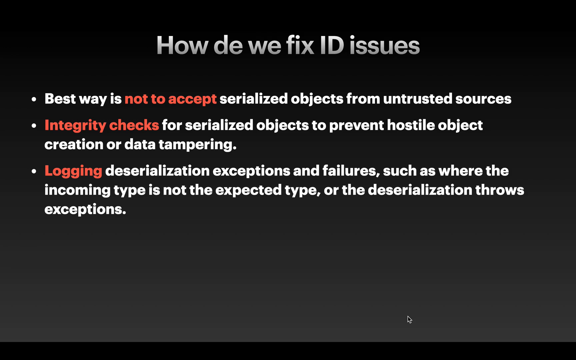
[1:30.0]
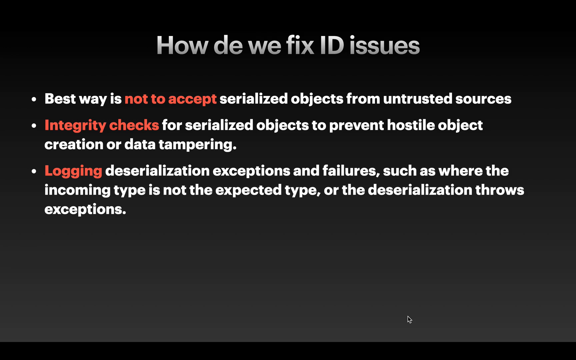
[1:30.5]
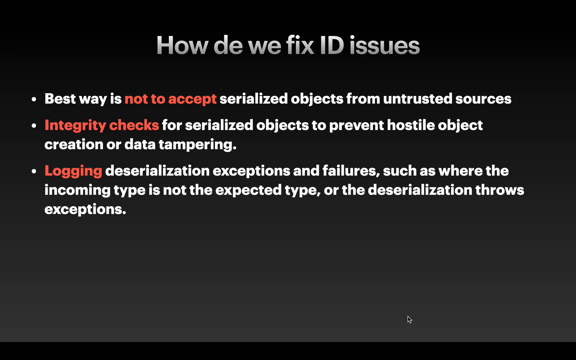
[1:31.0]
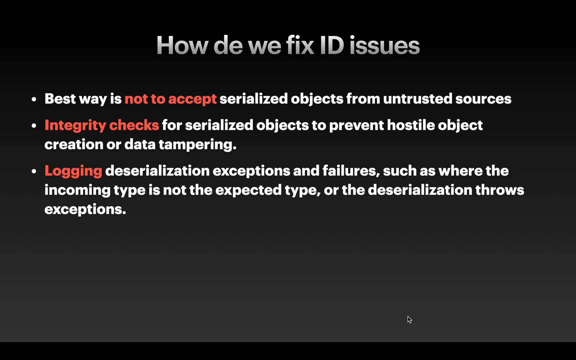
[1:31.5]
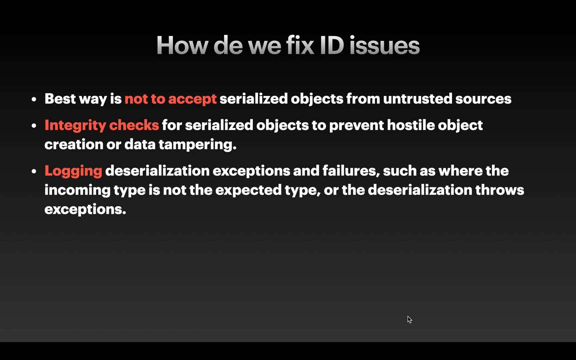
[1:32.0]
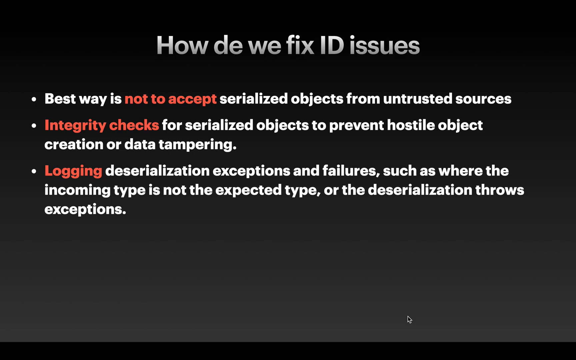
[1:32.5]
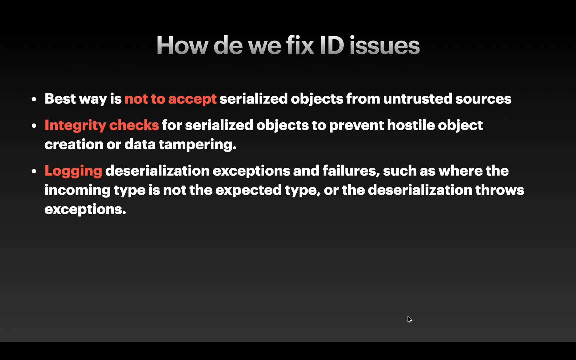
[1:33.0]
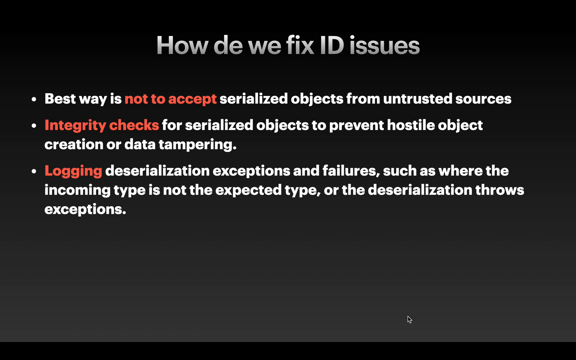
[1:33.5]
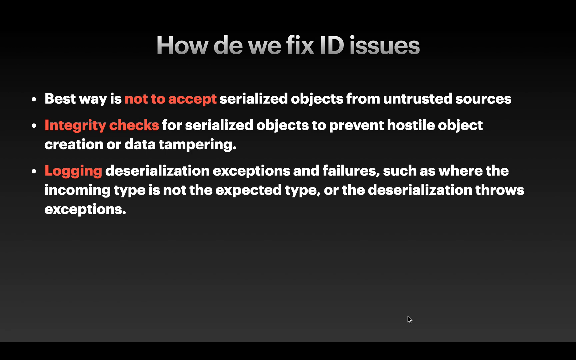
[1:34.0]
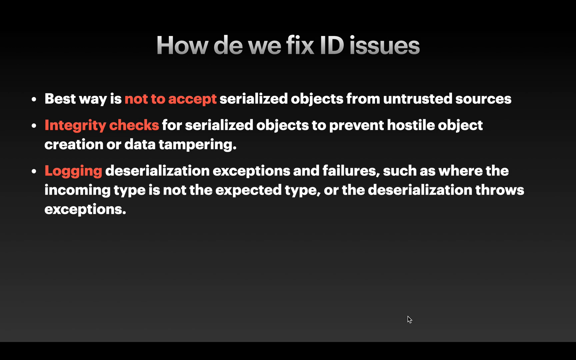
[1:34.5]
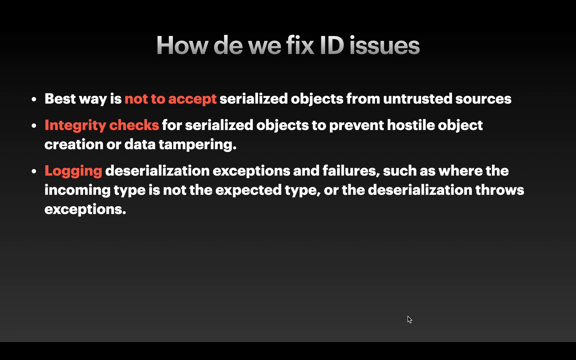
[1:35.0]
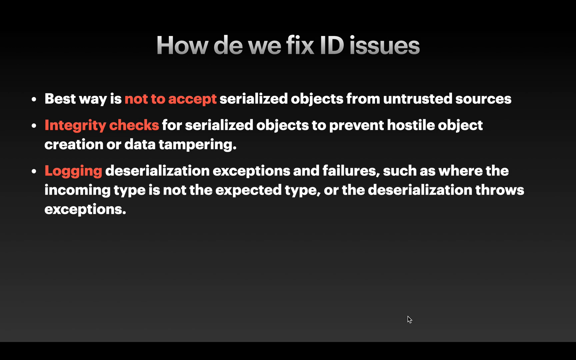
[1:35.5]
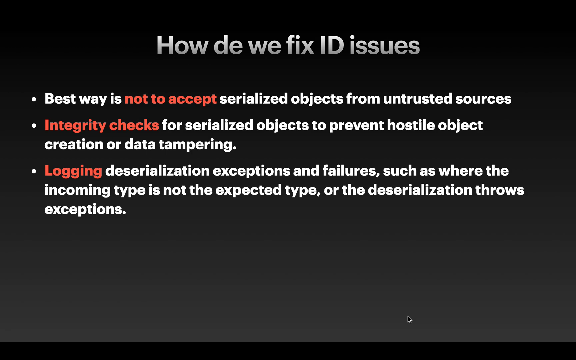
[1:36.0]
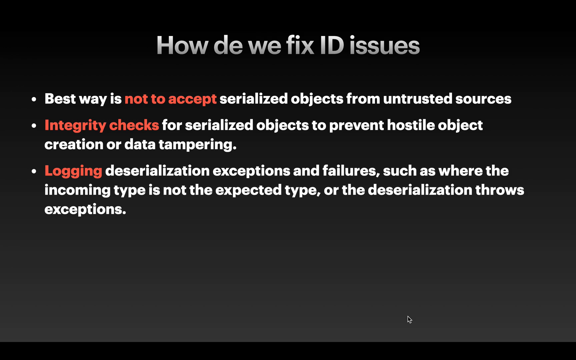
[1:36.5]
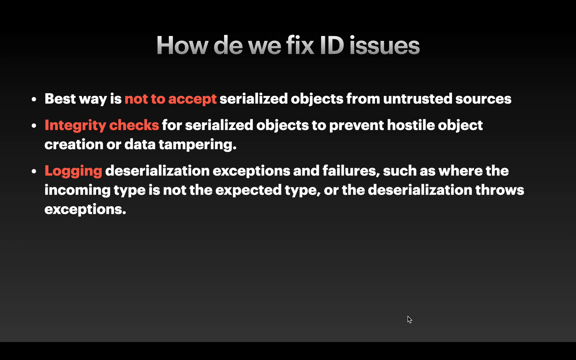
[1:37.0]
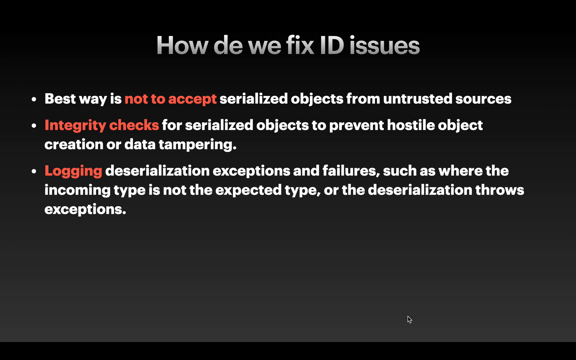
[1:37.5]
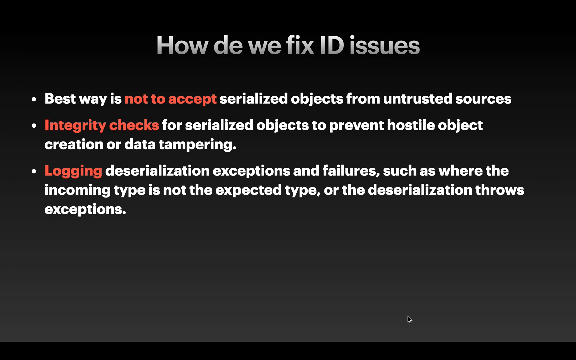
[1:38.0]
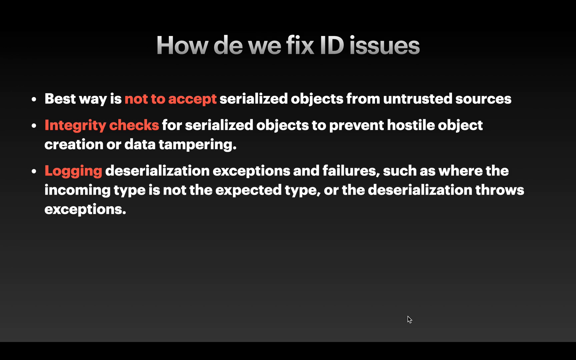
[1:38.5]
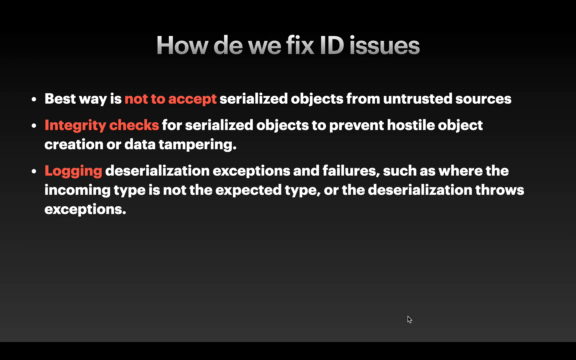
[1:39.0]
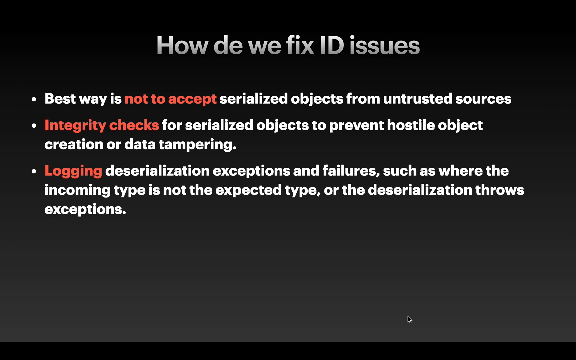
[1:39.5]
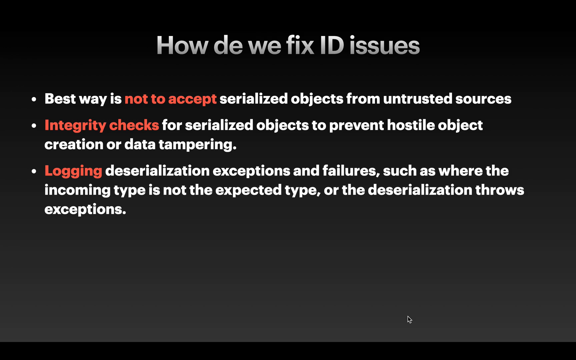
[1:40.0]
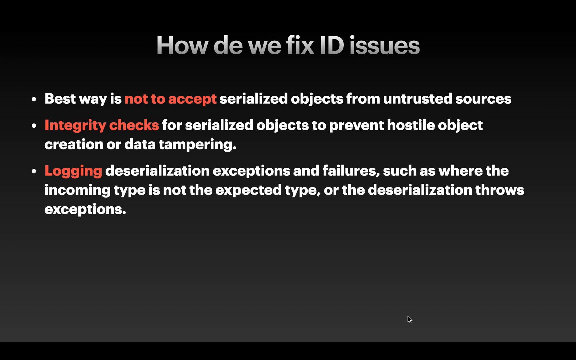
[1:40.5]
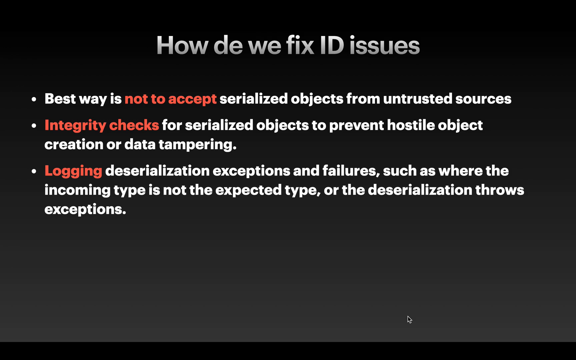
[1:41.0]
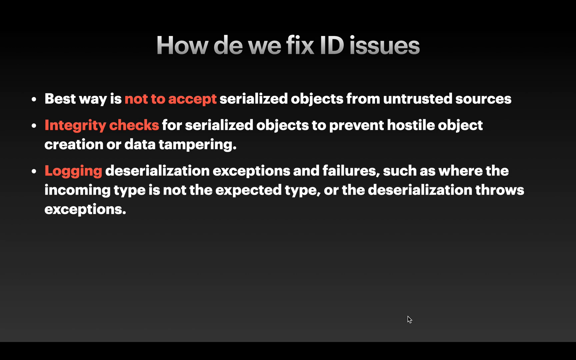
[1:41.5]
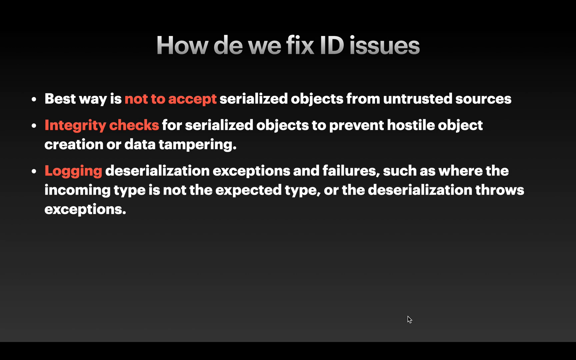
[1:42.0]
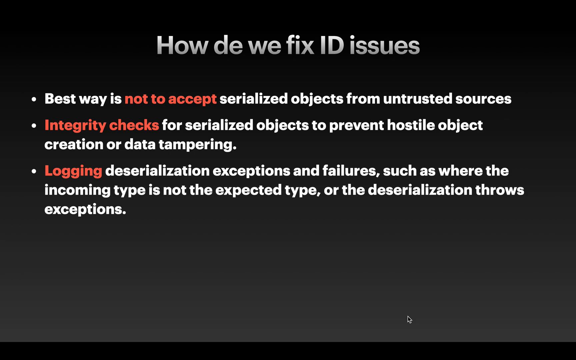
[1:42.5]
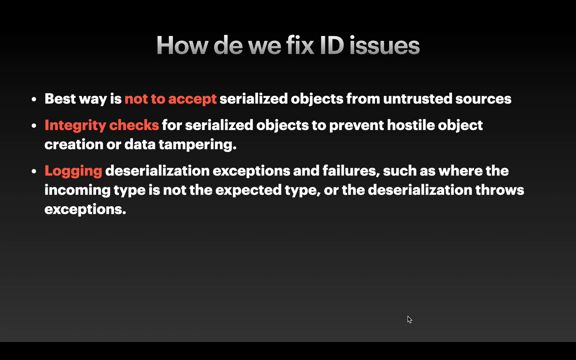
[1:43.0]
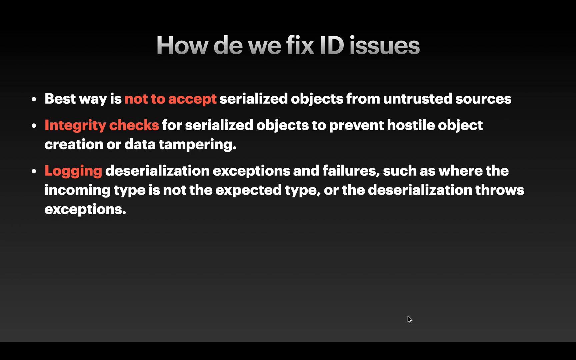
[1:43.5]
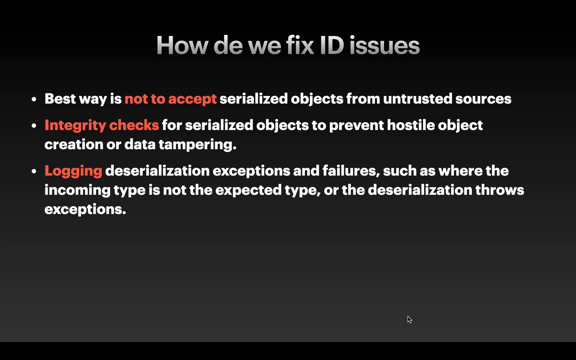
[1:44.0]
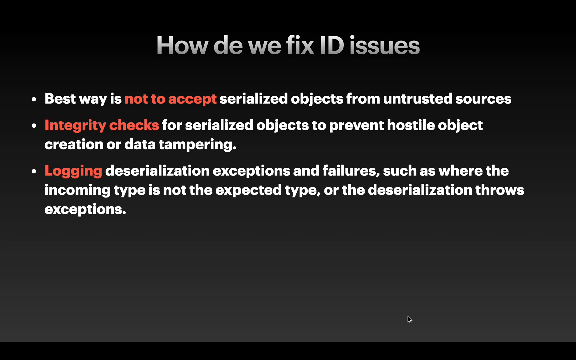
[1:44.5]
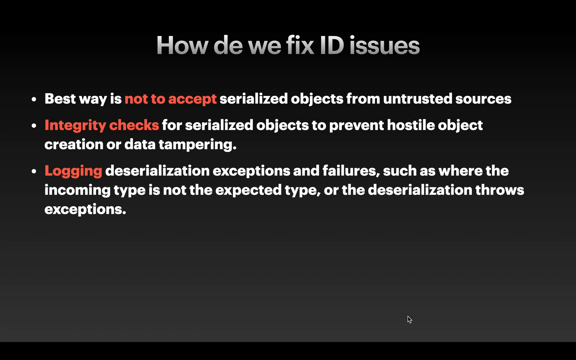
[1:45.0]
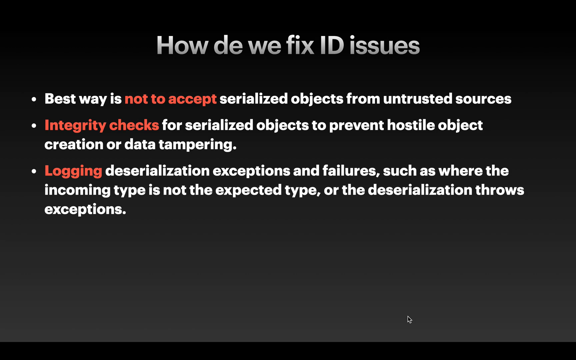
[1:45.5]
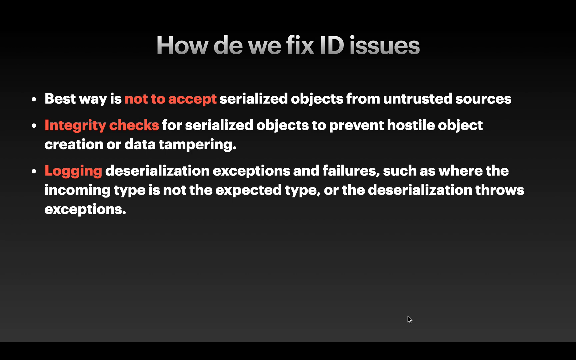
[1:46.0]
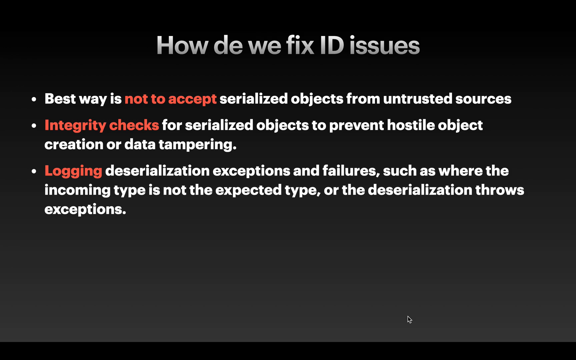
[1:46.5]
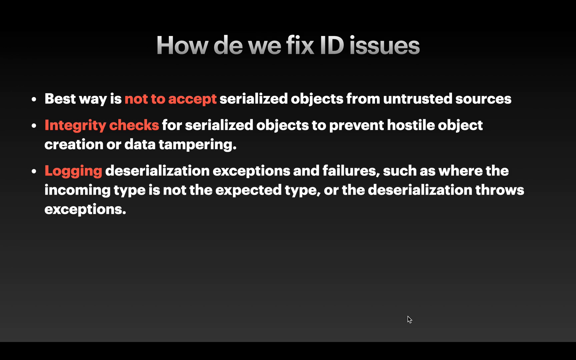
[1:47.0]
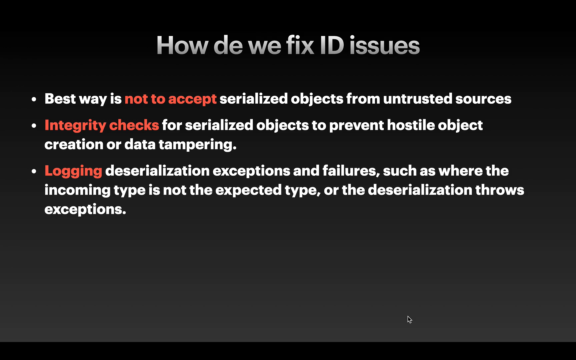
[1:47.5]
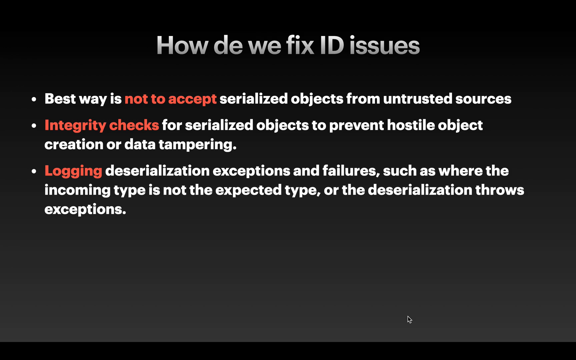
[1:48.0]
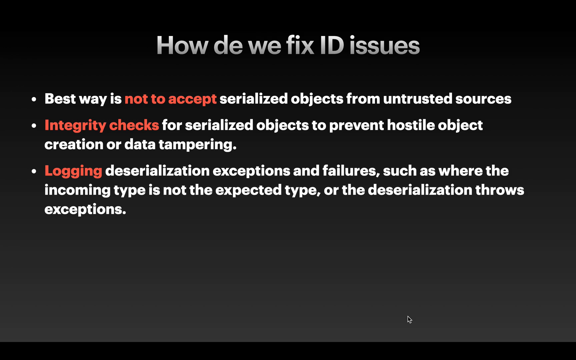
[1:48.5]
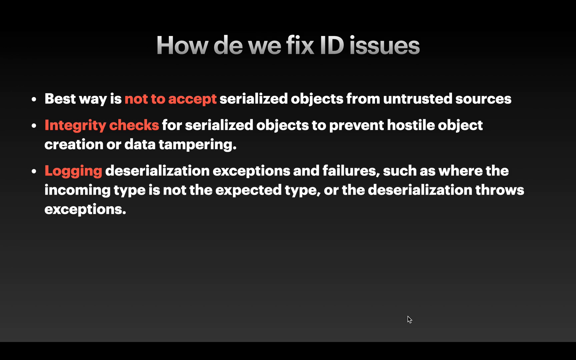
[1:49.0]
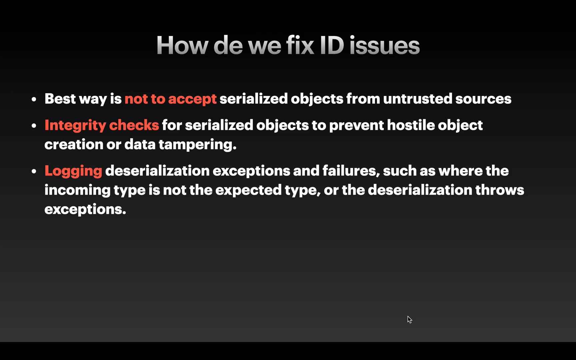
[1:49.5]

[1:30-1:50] The "how do we fix ID issues" slide continues, listing not accepting serialized objects from untrusted sources as the best option, along with integrity checks for serialized objects to prevent hostile object creation or data tampering, and logging deserialization exceptions and failures, such as where the incoming type is not the expected type.